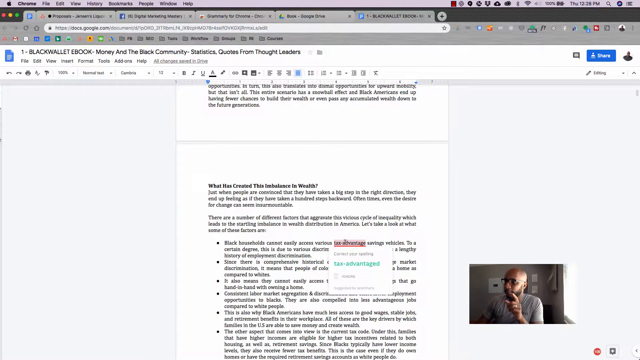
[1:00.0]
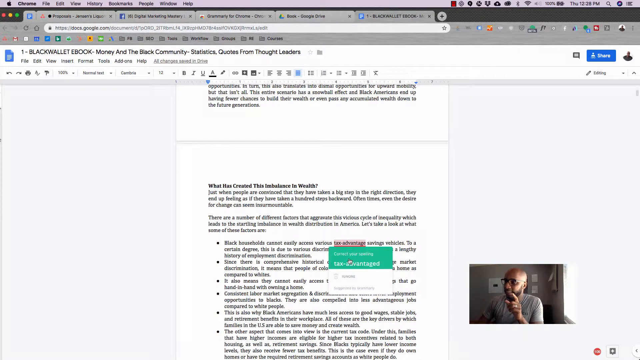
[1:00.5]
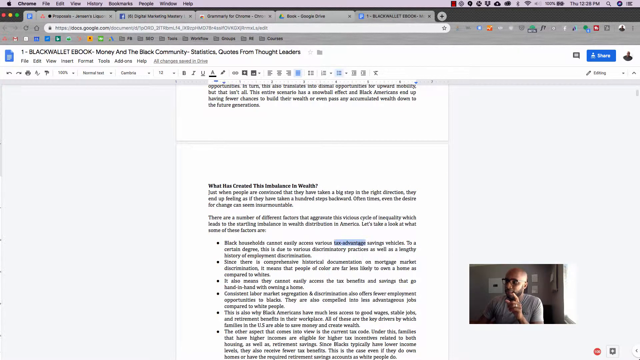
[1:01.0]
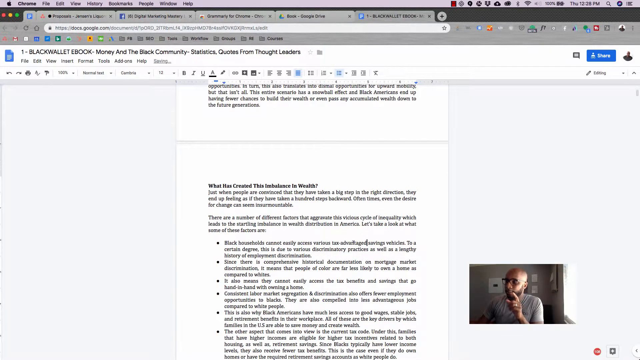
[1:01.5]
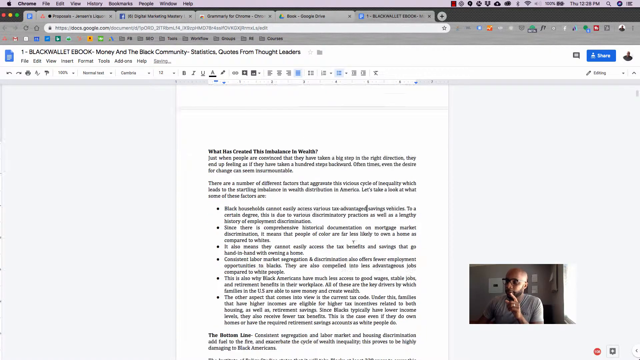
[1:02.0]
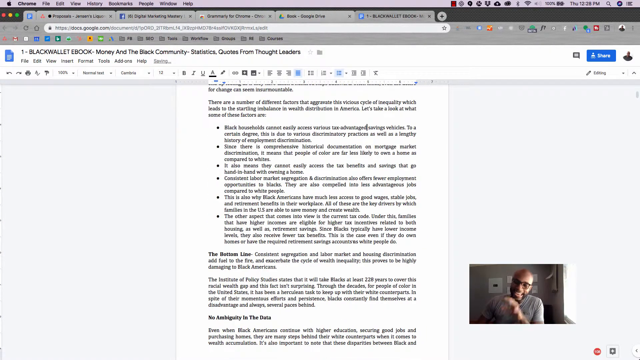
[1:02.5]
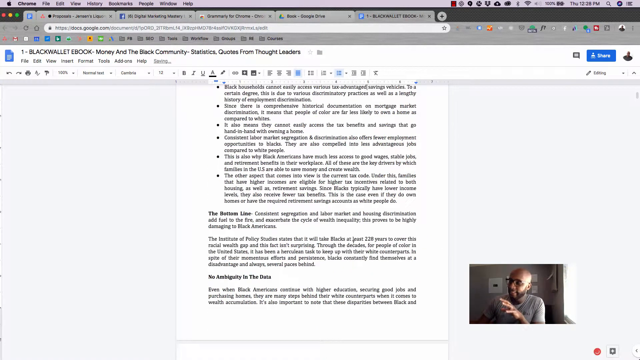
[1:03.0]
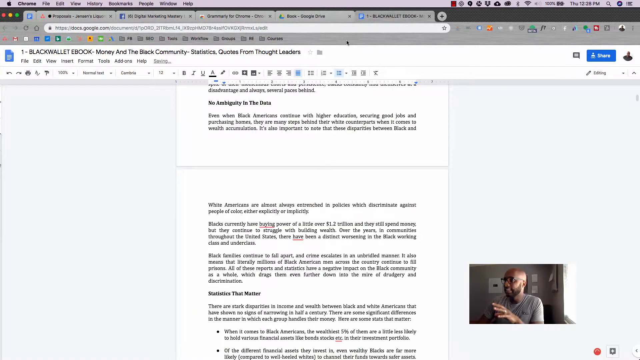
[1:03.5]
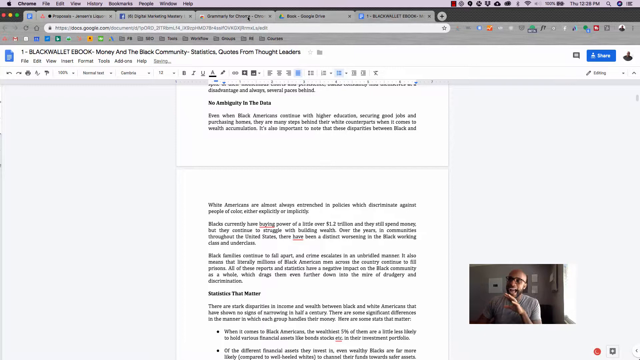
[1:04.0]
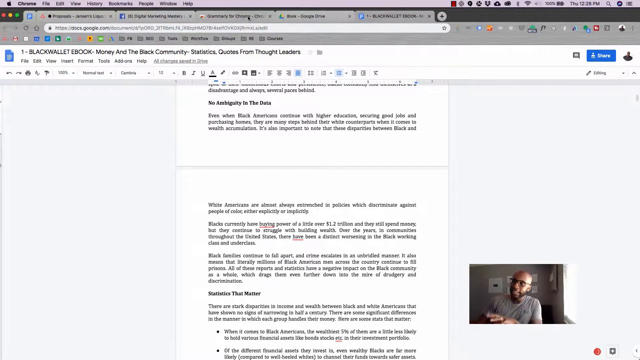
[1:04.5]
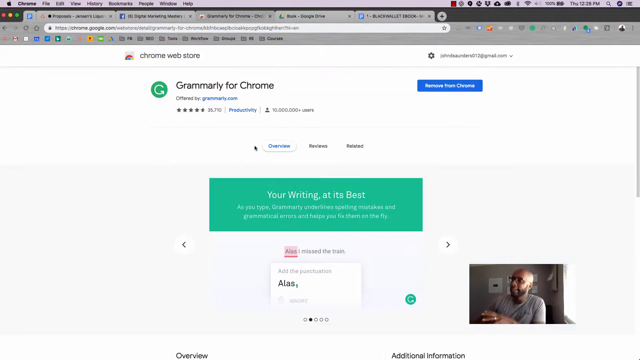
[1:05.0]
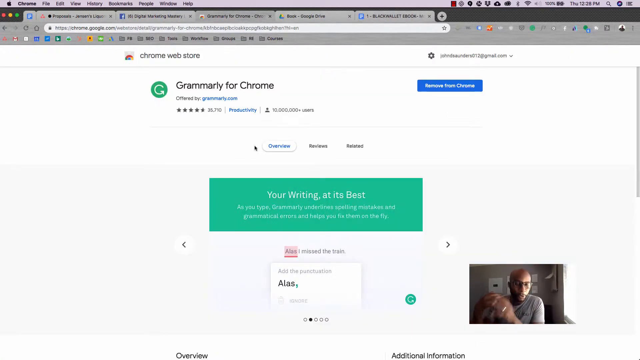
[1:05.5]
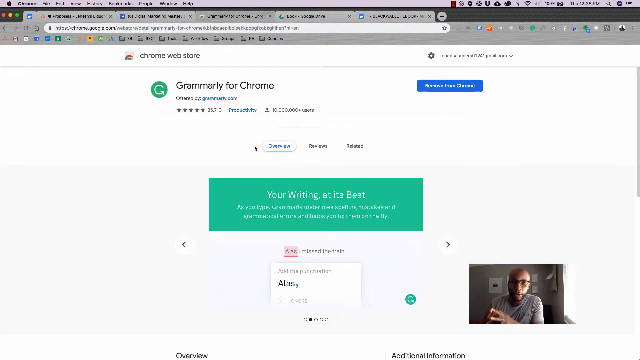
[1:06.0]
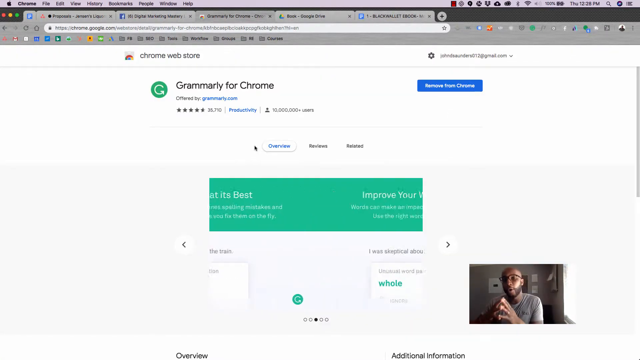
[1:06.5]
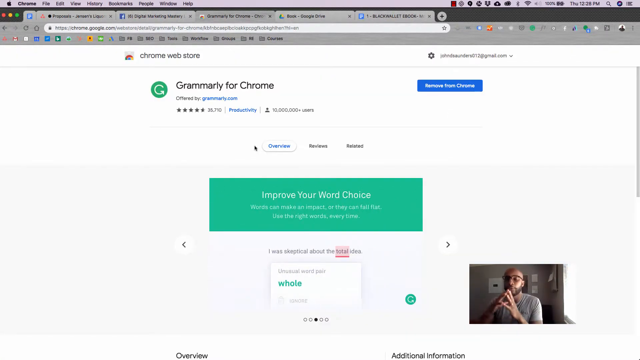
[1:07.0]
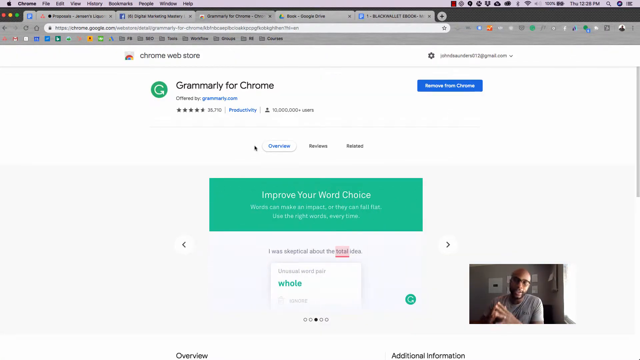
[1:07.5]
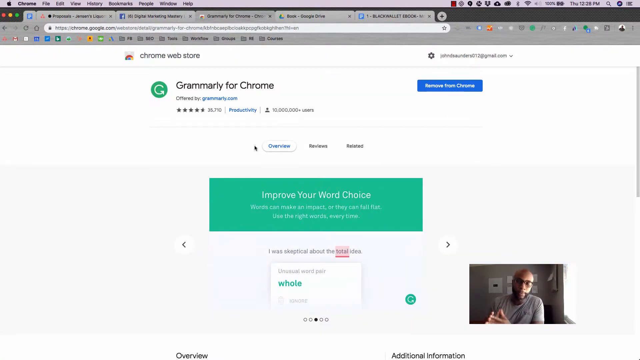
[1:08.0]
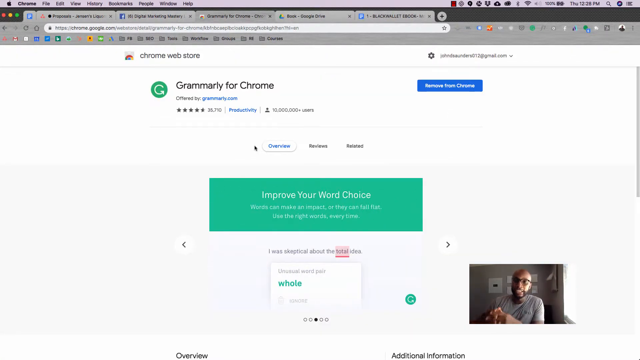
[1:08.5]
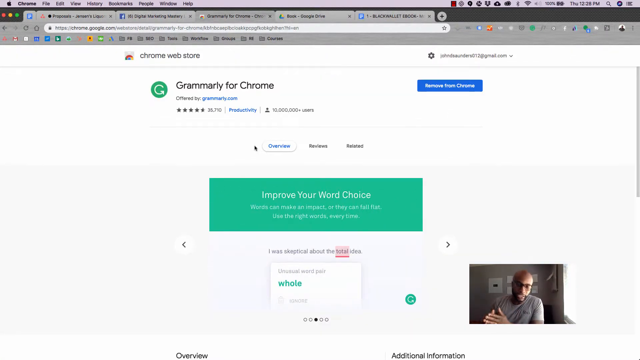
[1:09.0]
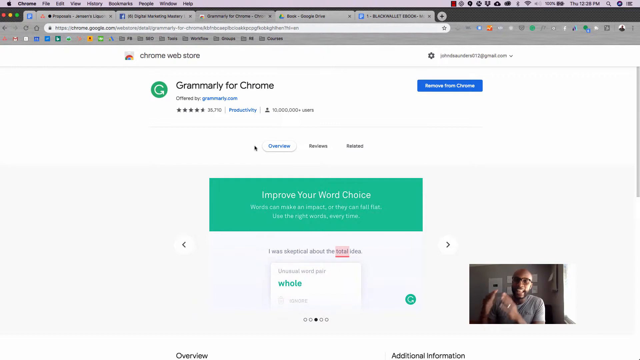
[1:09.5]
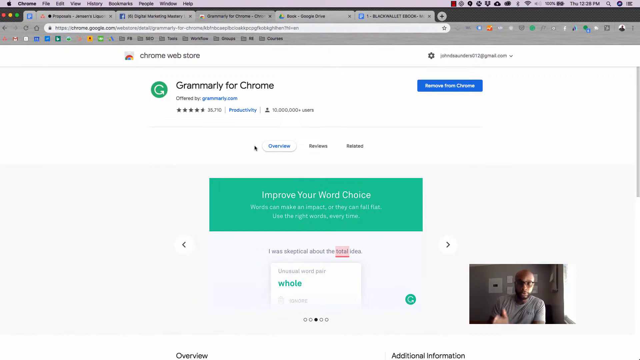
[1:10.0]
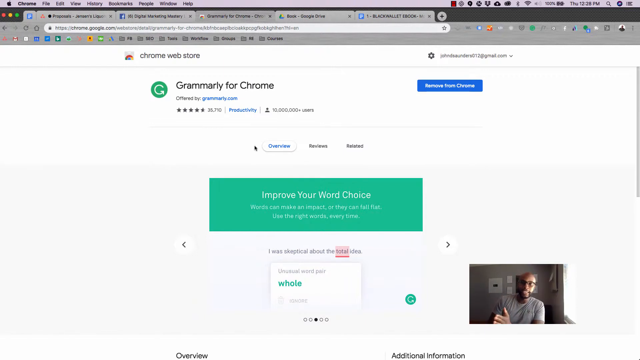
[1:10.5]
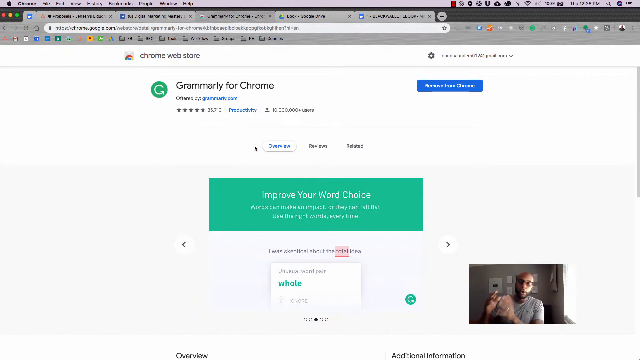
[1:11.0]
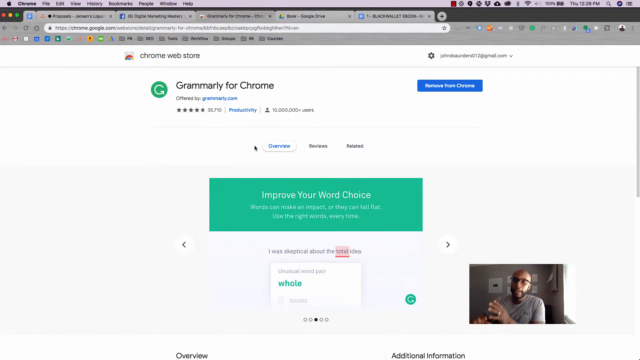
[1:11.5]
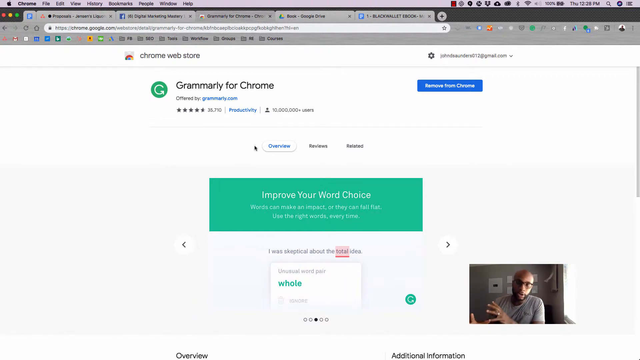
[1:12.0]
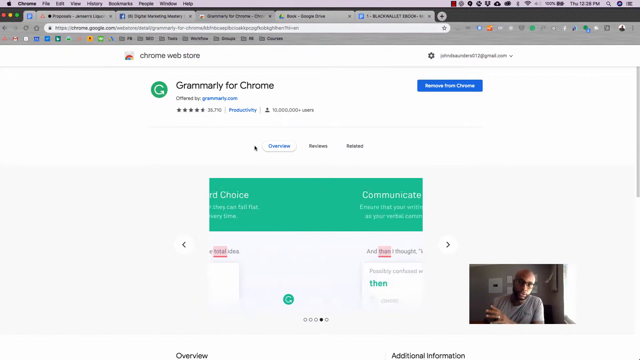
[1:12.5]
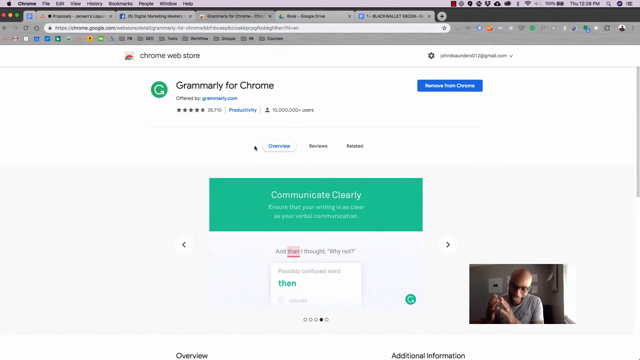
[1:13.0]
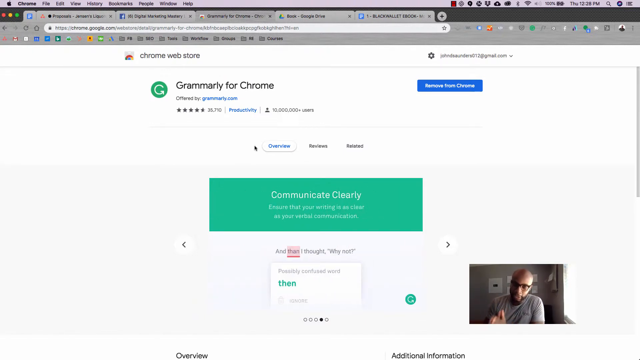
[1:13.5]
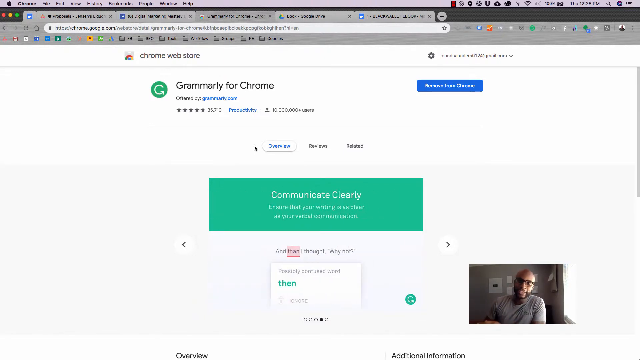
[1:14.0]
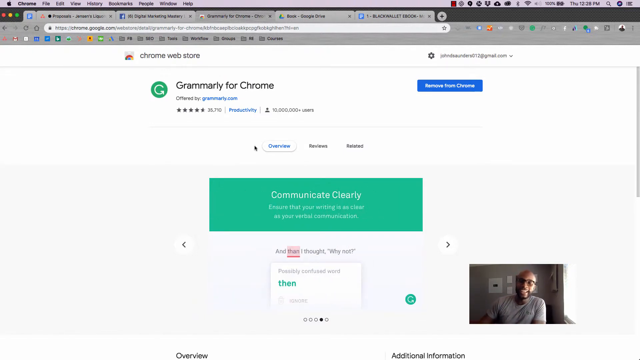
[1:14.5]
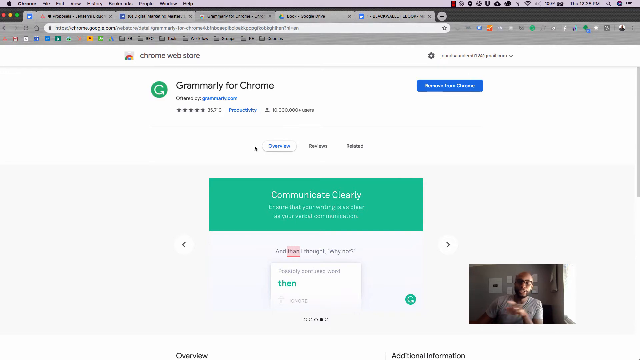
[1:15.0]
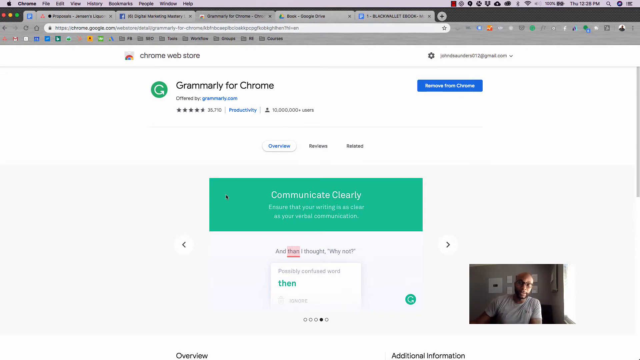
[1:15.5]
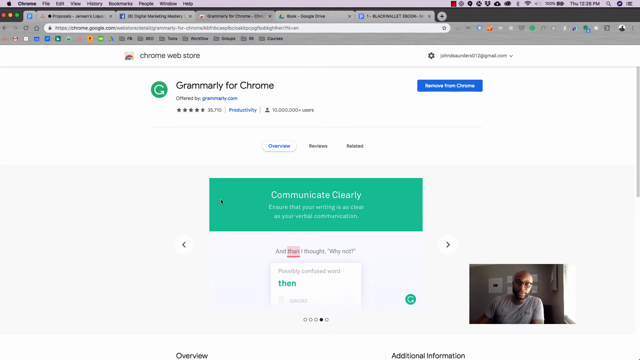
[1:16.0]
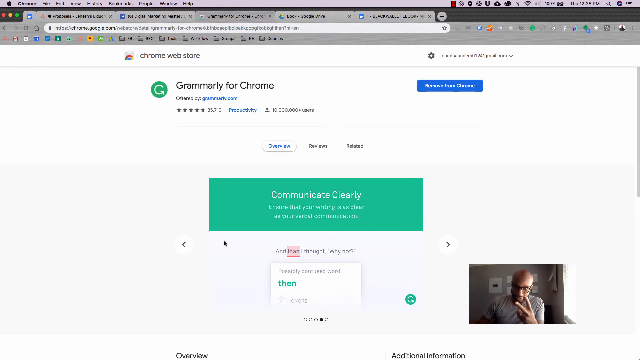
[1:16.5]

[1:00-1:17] The man goes page by page through the document, correcting each word the grammar extension flags and looking for more. He then goes to the Chrome Web Store page for the Grammarly for Chrome extension, where the video finishes.